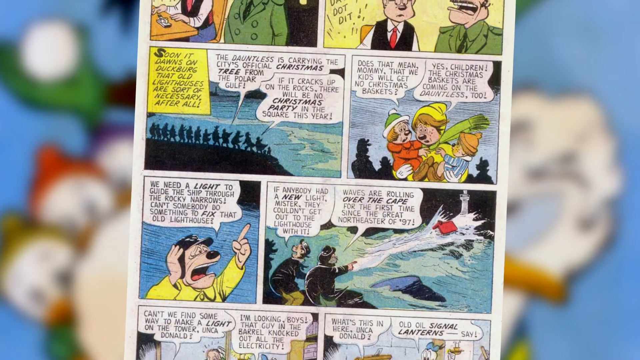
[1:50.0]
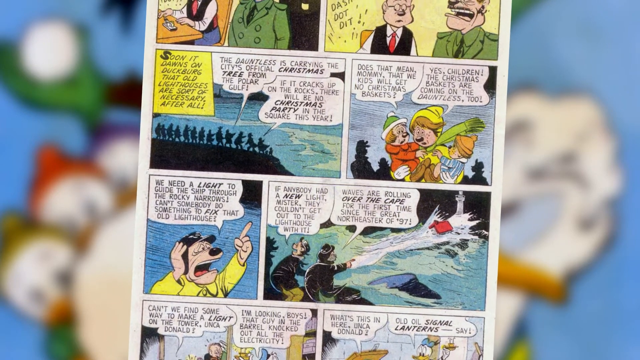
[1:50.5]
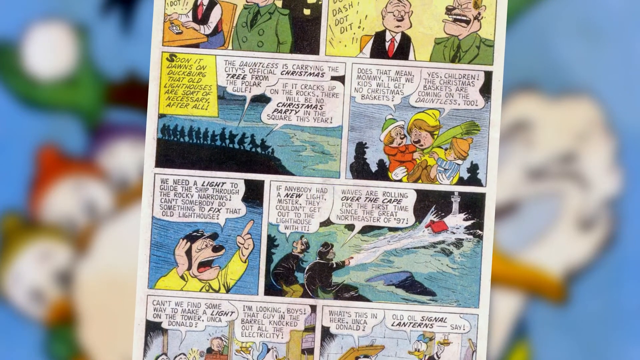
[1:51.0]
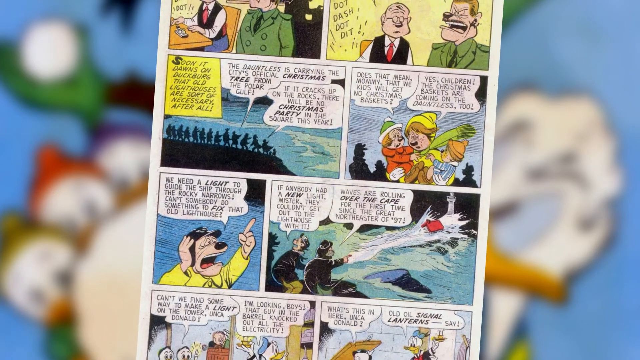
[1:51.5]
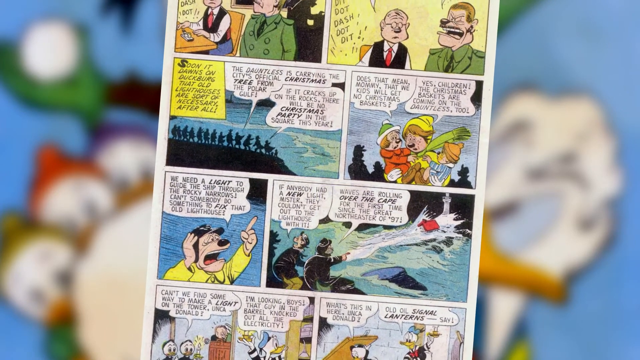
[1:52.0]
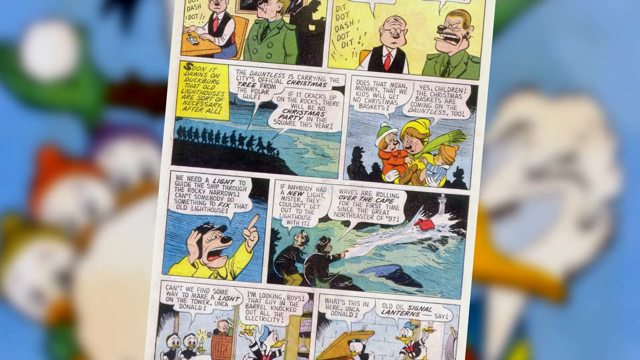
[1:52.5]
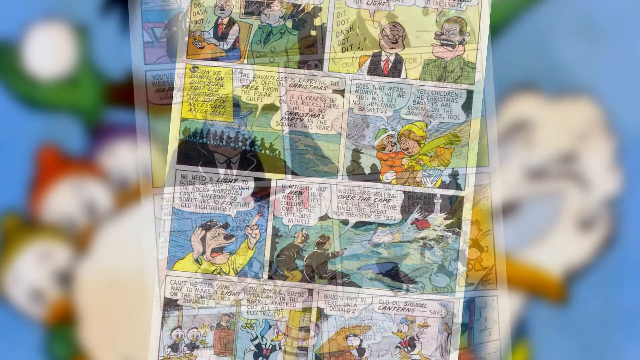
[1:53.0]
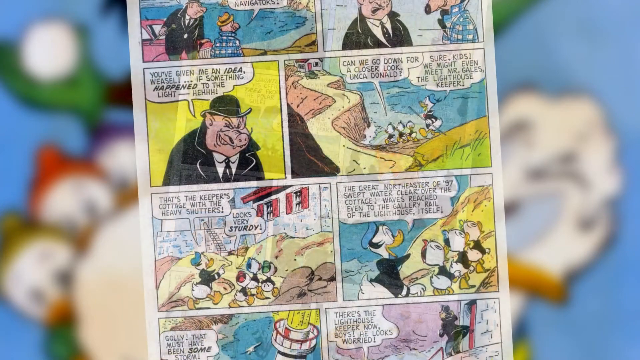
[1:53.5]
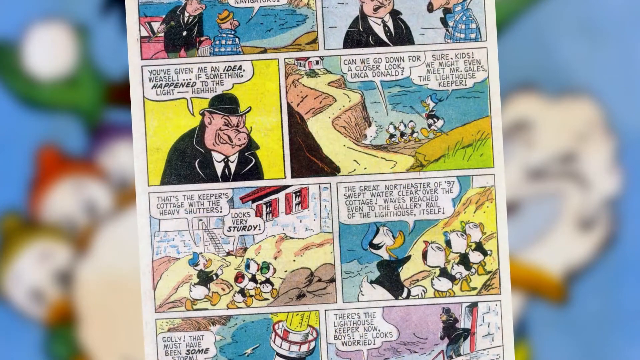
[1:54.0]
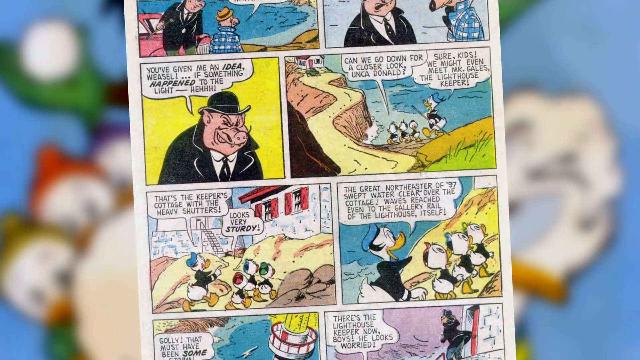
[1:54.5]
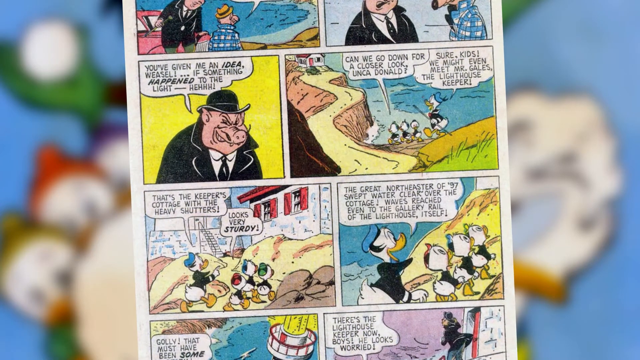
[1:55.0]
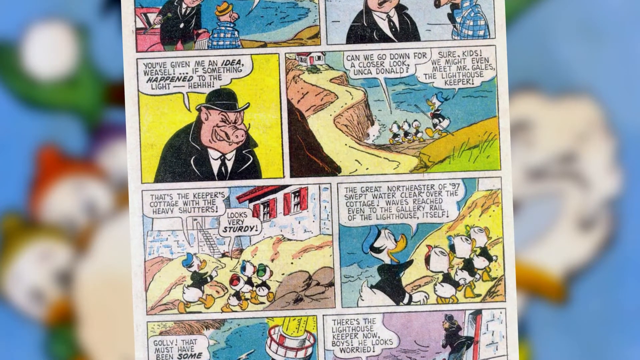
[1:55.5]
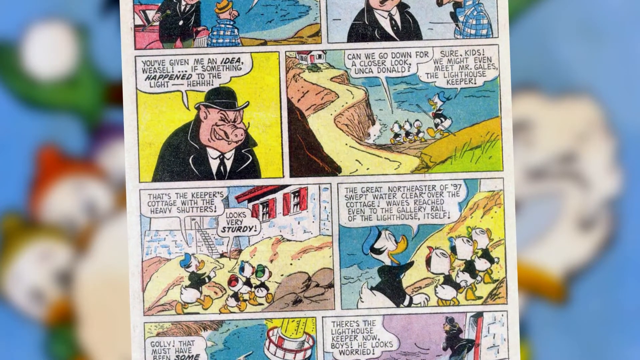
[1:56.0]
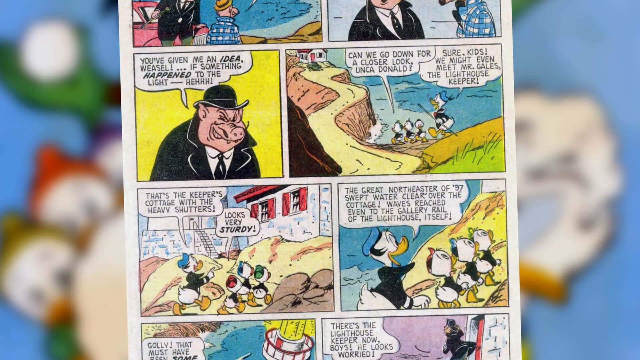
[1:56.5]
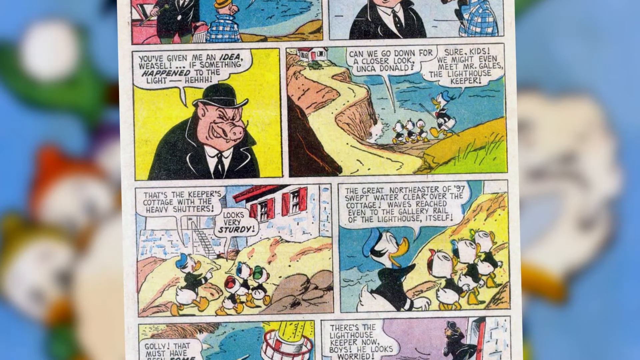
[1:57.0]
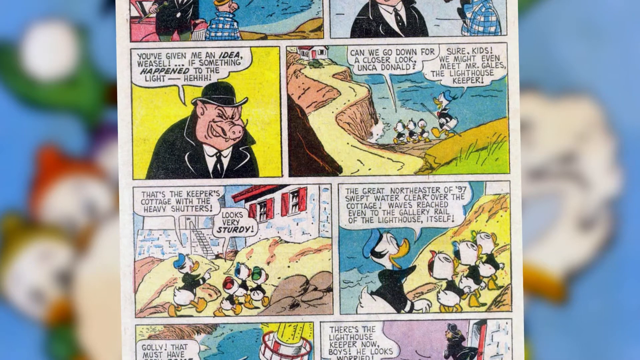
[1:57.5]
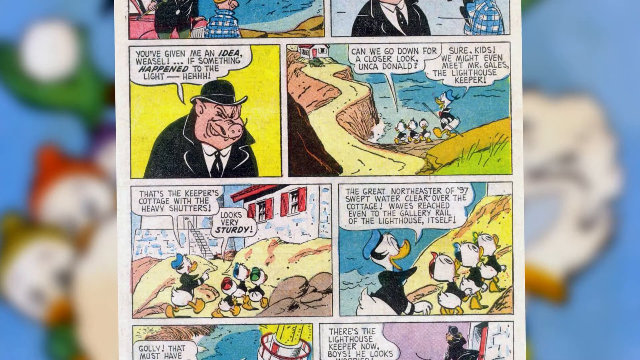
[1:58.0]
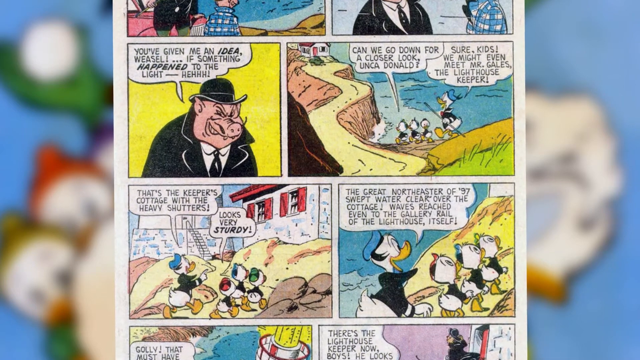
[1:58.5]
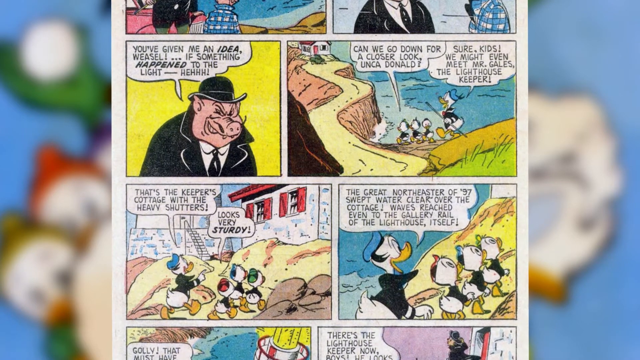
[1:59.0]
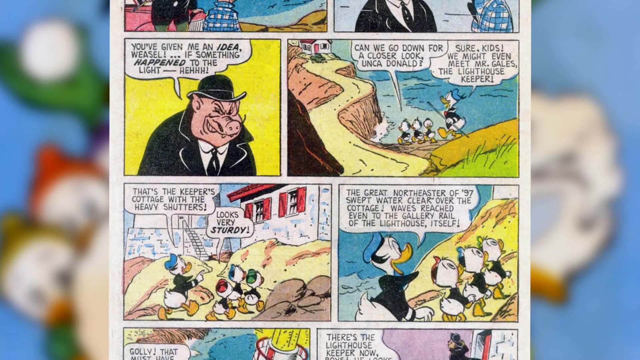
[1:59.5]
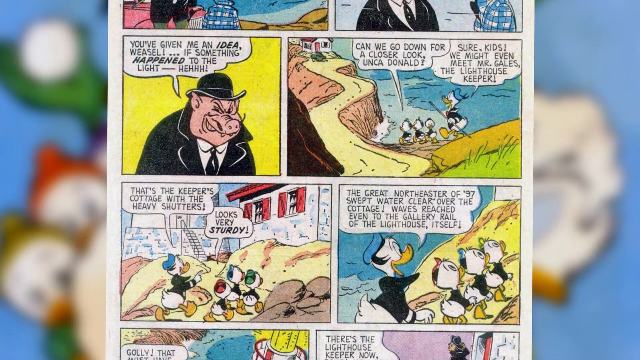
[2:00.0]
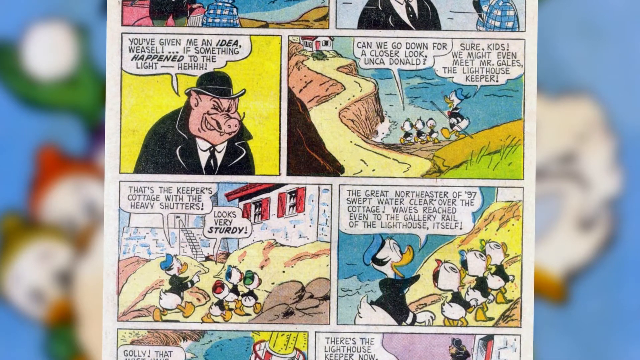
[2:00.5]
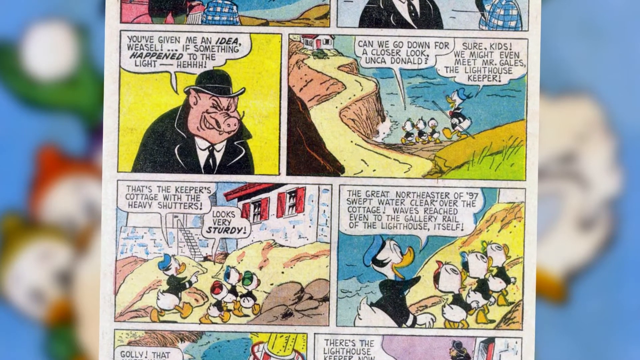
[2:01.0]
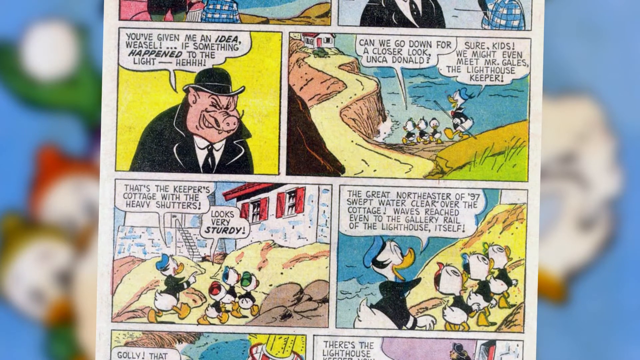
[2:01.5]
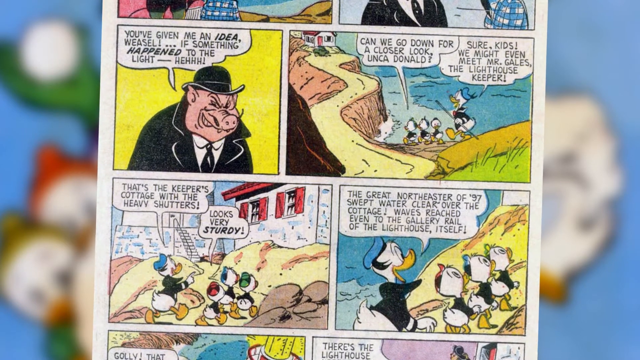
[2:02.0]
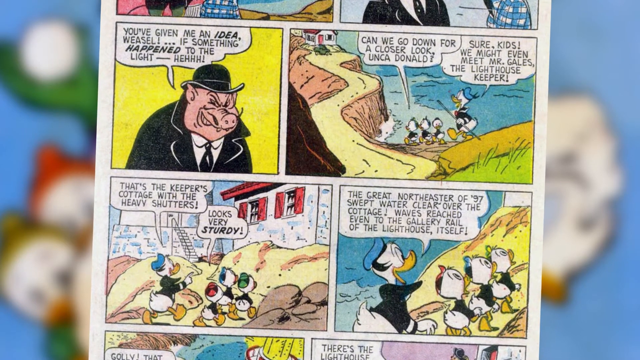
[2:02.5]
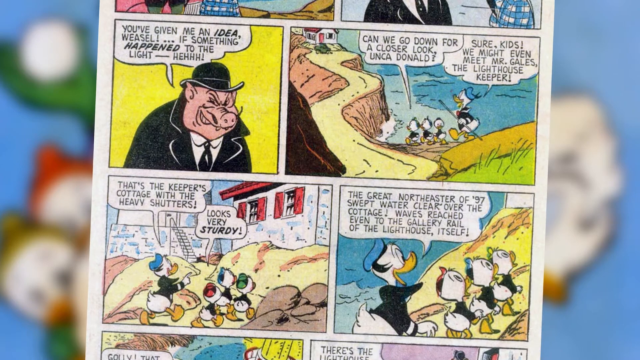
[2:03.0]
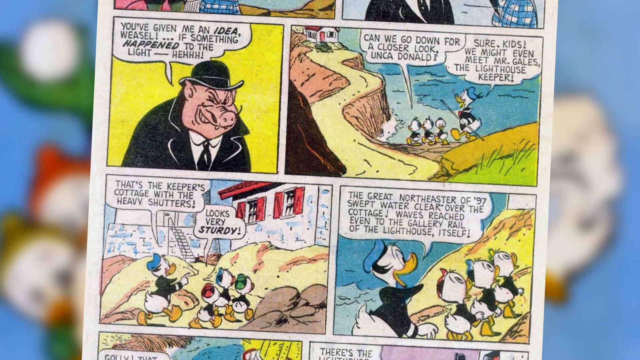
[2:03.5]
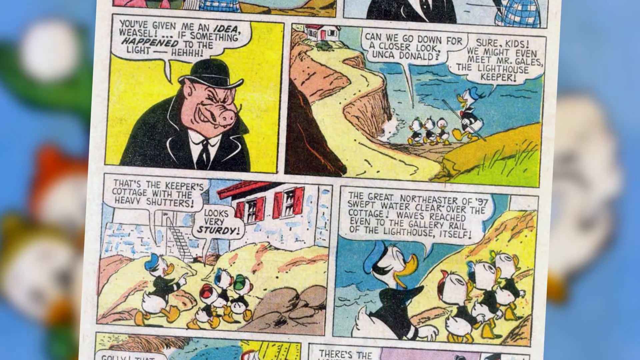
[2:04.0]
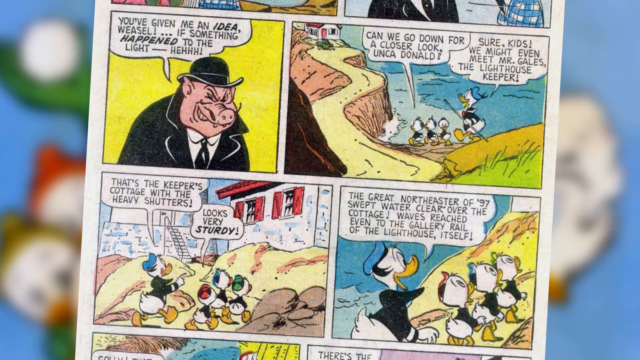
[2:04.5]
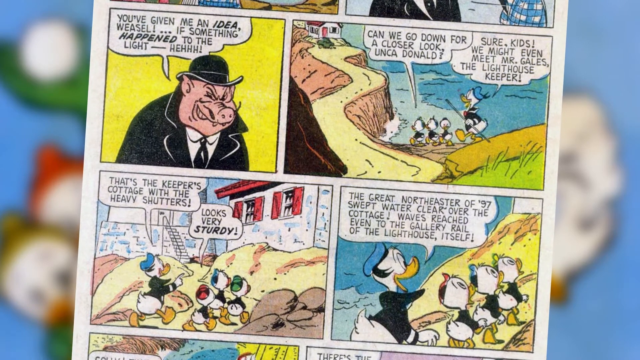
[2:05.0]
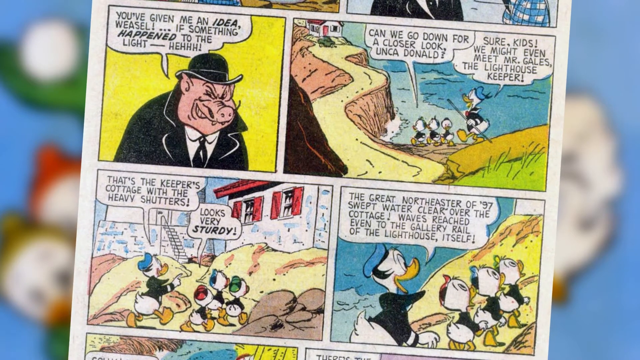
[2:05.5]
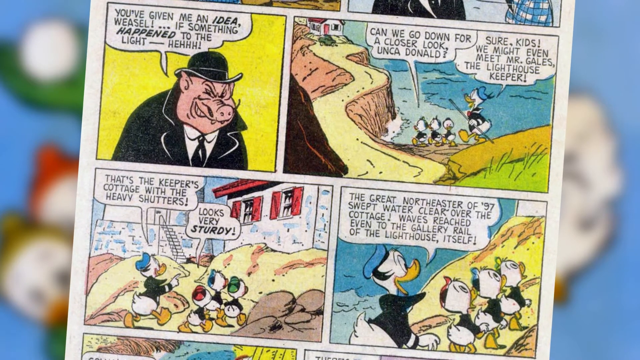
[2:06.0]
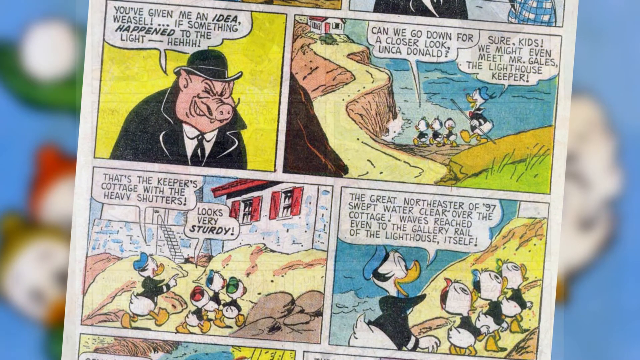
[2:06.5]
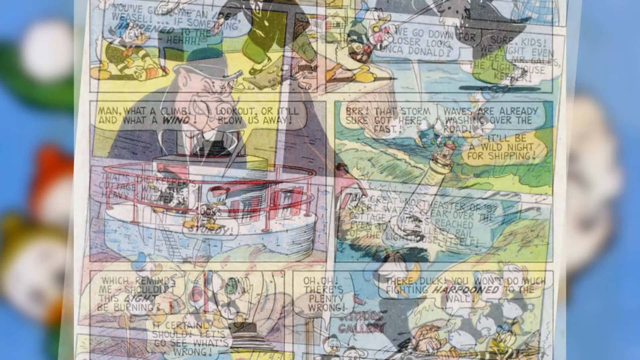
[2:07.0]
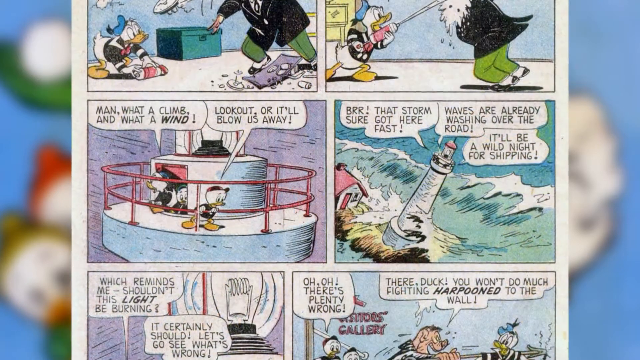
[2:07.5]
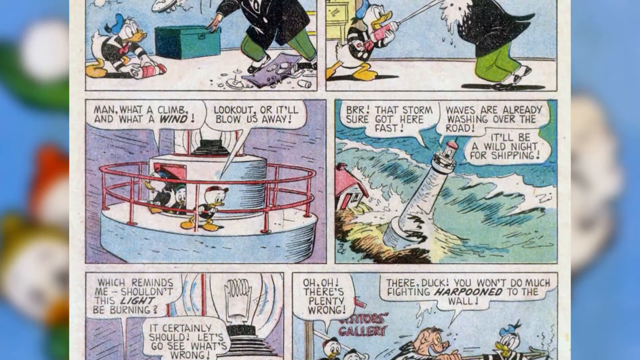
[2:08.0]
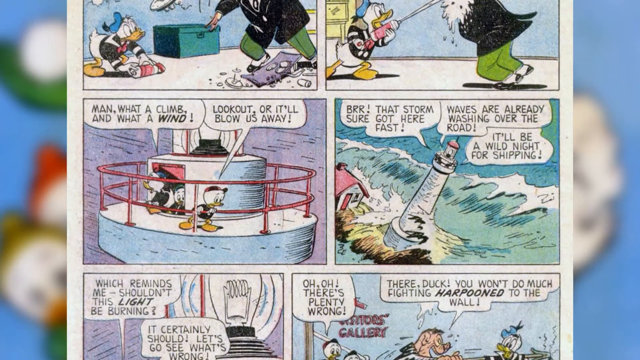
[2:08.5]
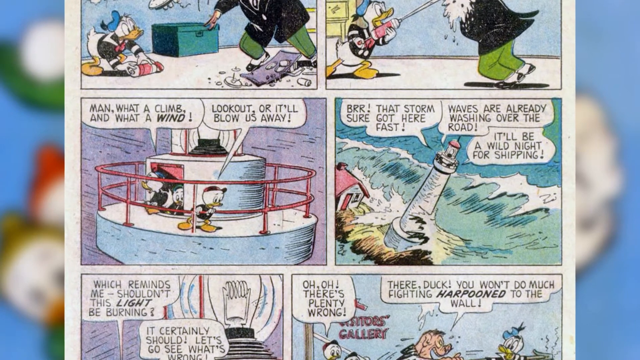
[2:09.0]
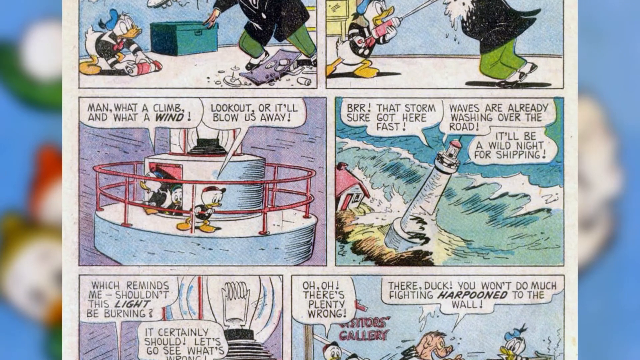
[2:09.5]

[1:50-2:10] Images of the comic strip tell the story of Daffy Duck and three little ducks trying to save a lighthouse targeted by greedy businessmen who want the land. The businessmen cut the lighthouse's phone during a rough storm. During the very bad storm, a ship needs the lighthouse to navigate through the rough waves, but the lighthouse has no electricity. Daffy Duck and the three little ducks go to the lighthouse, meet the lighthouse keeper, help him try to save his cottage during the storm, and try to find a light source to illuminate the old lighthouse and save the ship lost at sea.